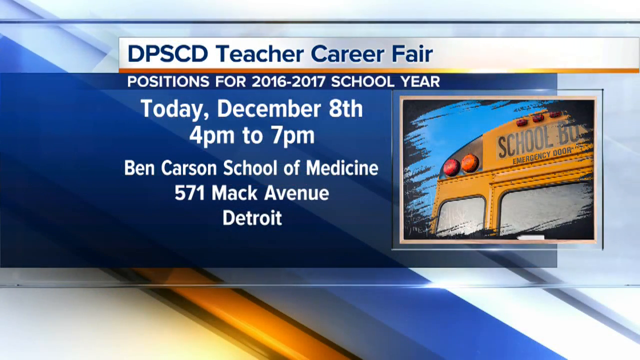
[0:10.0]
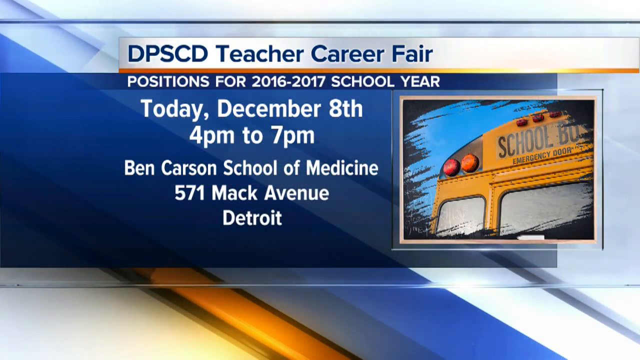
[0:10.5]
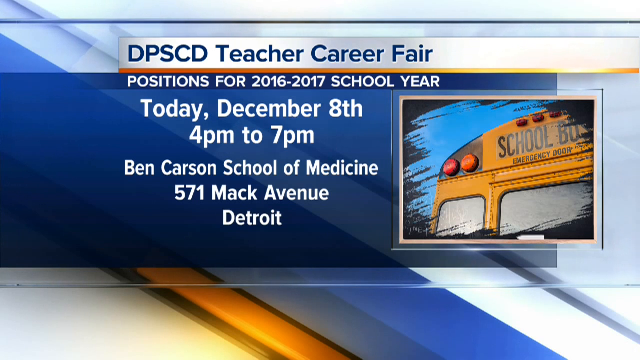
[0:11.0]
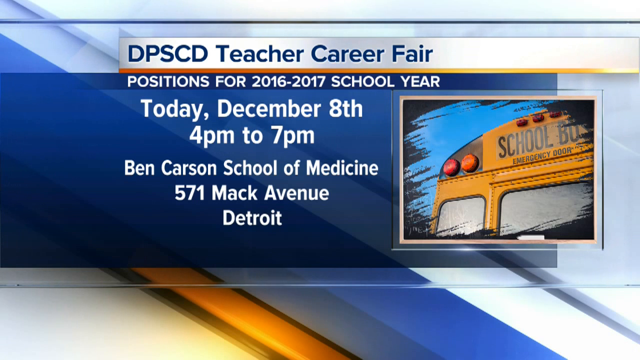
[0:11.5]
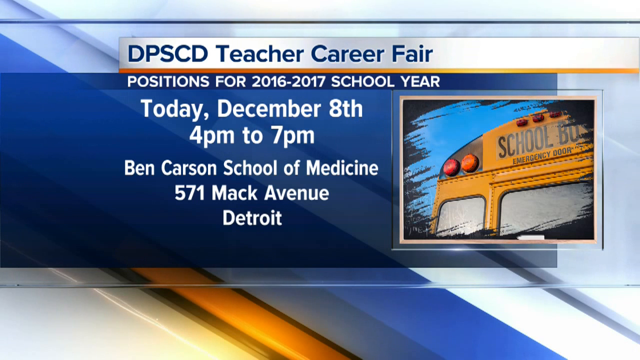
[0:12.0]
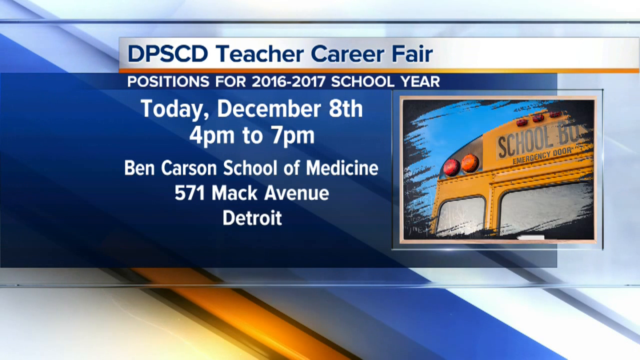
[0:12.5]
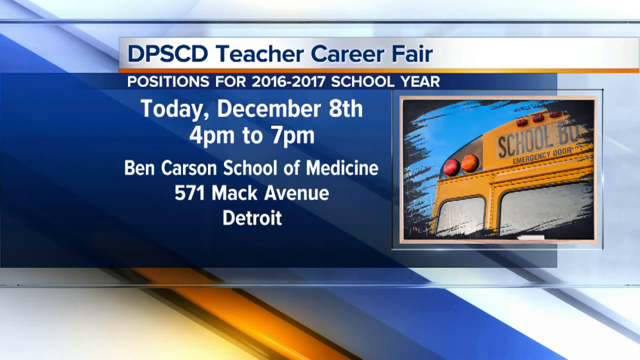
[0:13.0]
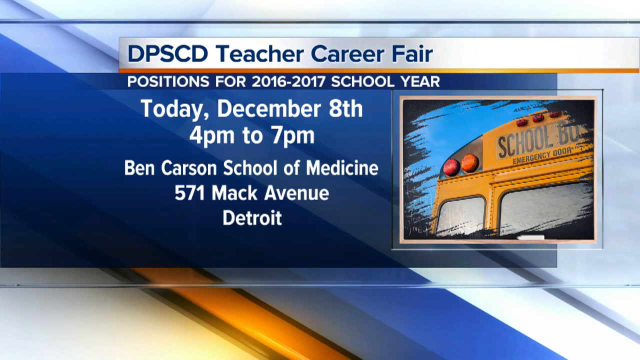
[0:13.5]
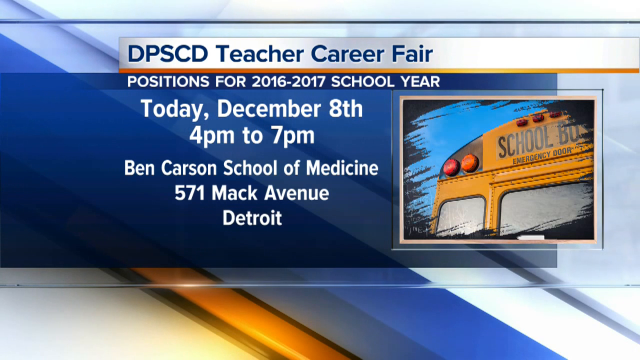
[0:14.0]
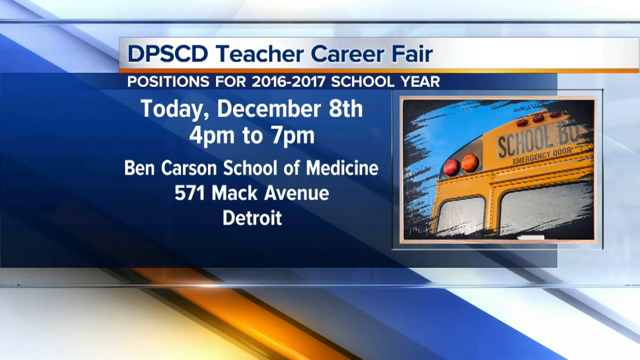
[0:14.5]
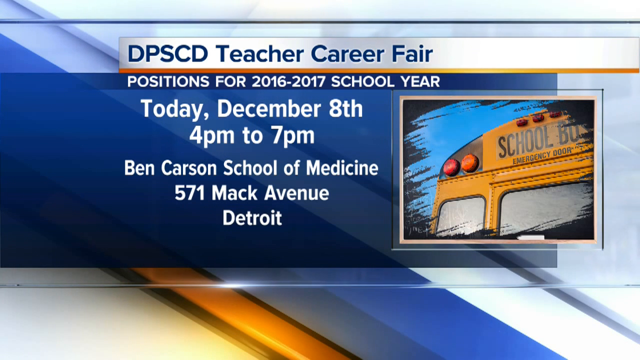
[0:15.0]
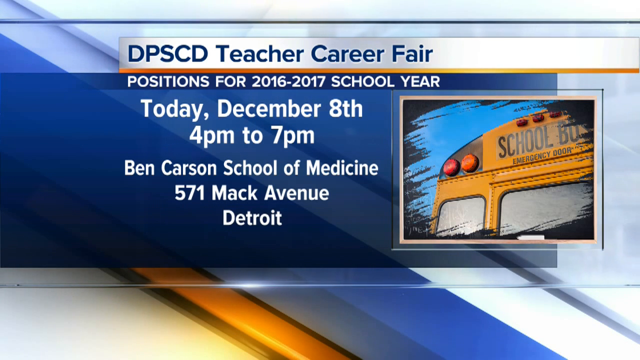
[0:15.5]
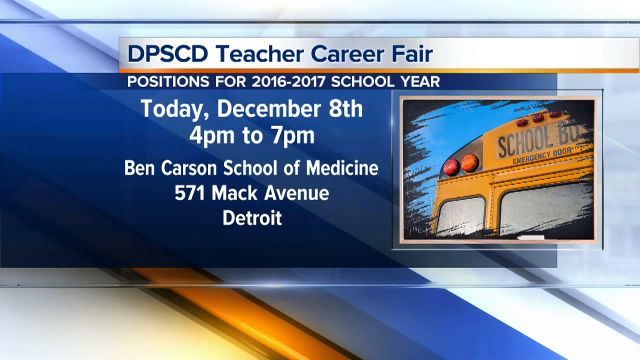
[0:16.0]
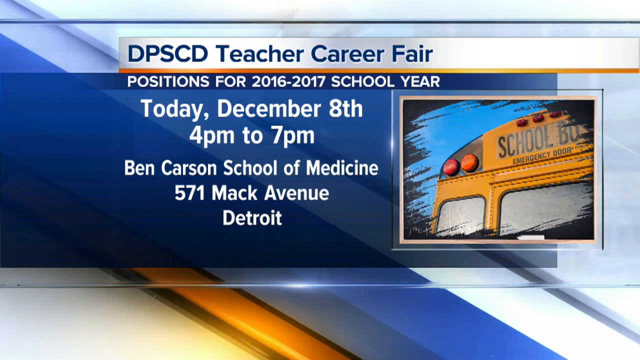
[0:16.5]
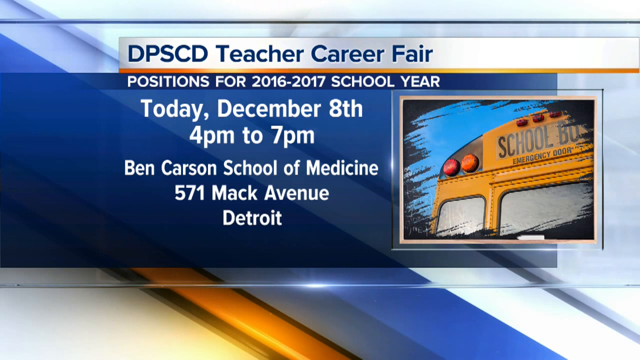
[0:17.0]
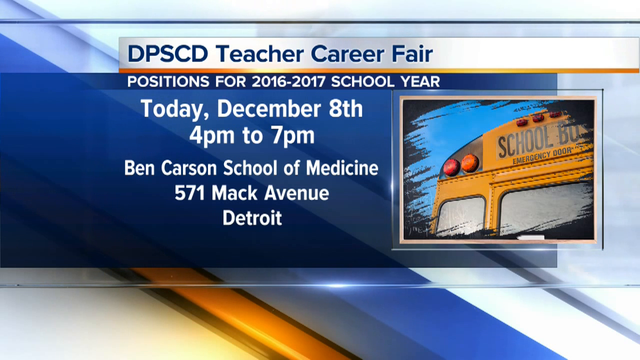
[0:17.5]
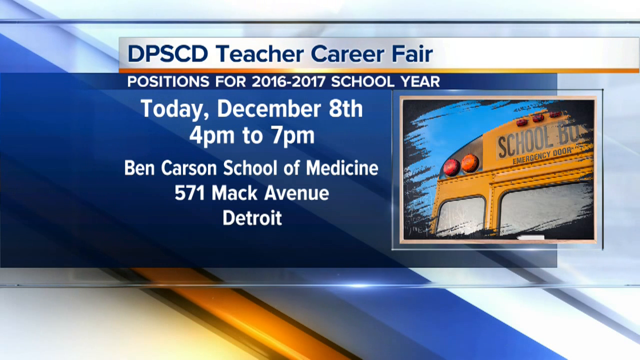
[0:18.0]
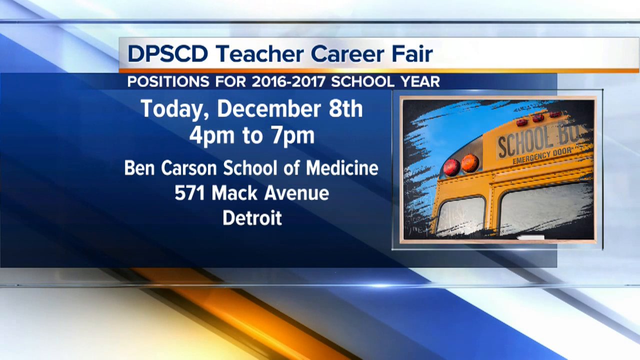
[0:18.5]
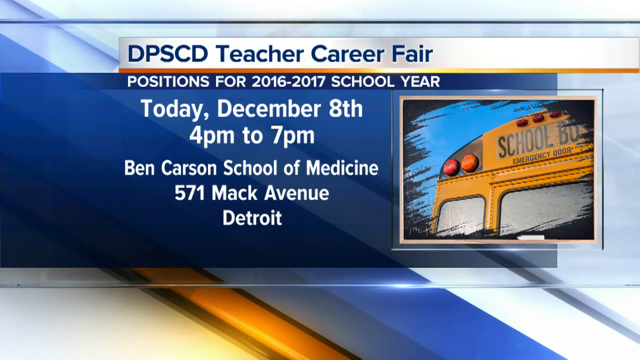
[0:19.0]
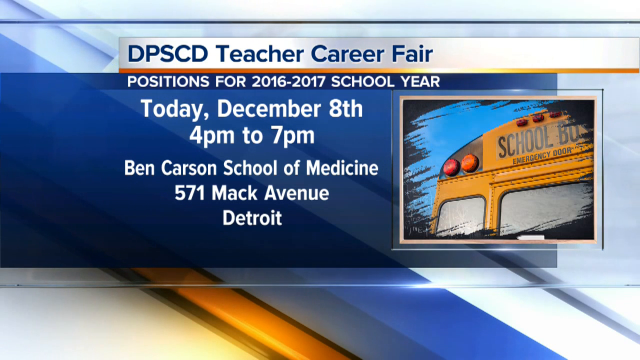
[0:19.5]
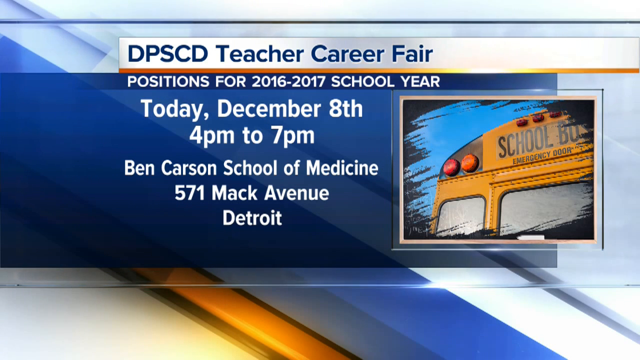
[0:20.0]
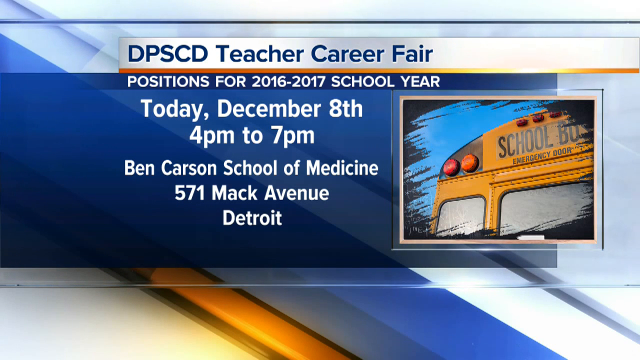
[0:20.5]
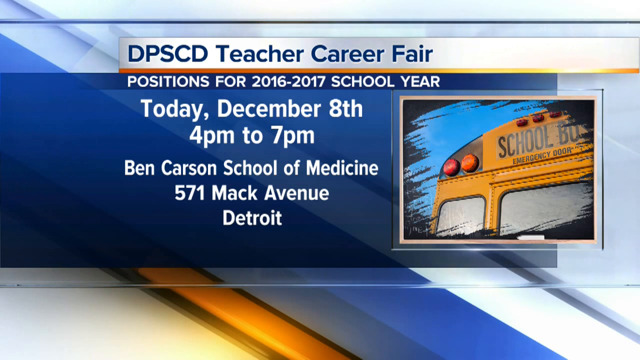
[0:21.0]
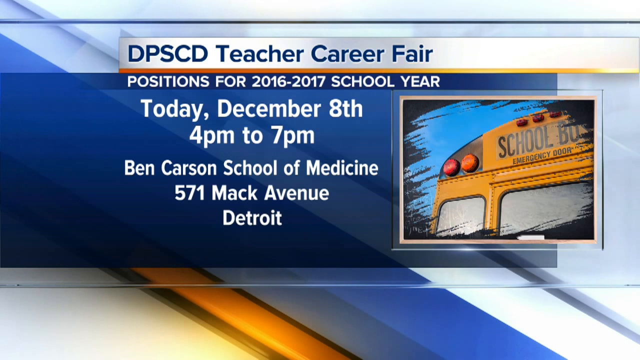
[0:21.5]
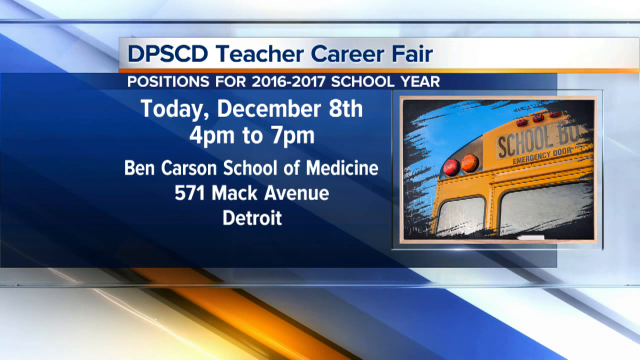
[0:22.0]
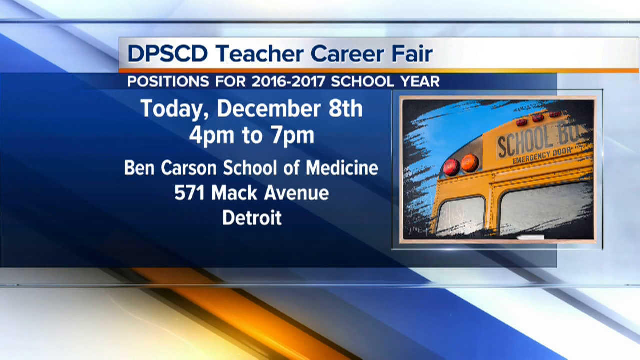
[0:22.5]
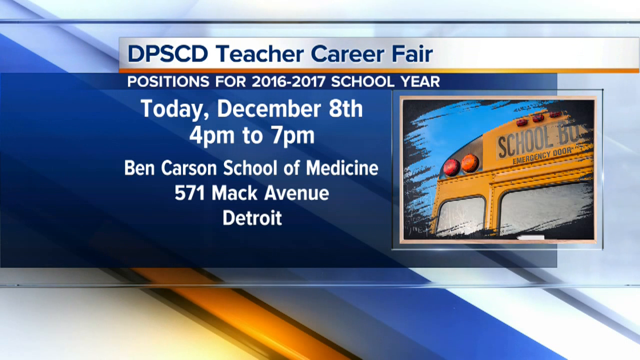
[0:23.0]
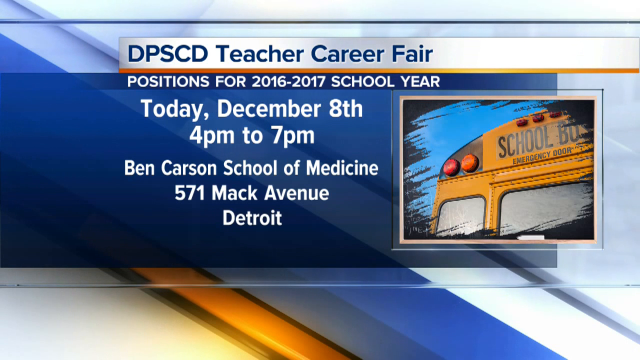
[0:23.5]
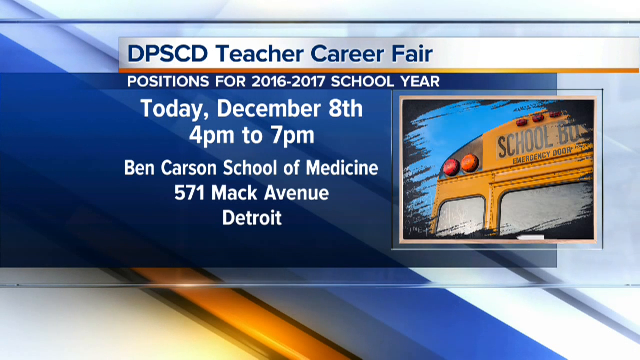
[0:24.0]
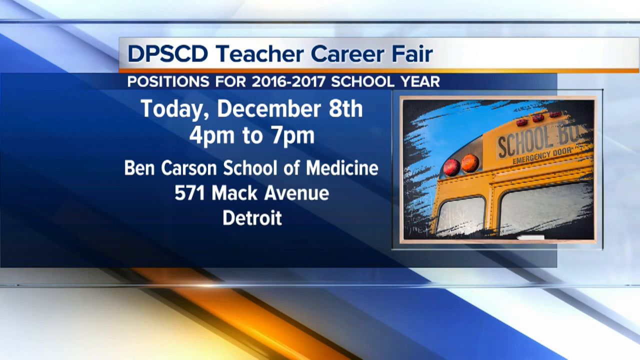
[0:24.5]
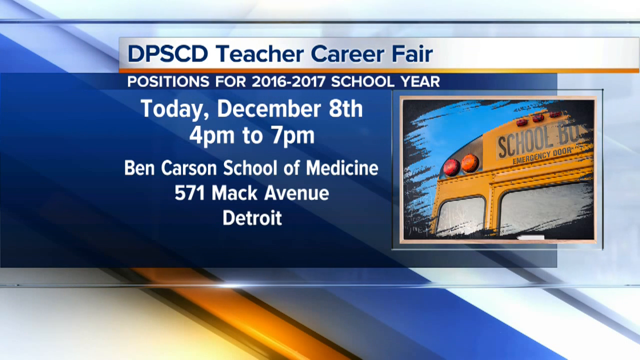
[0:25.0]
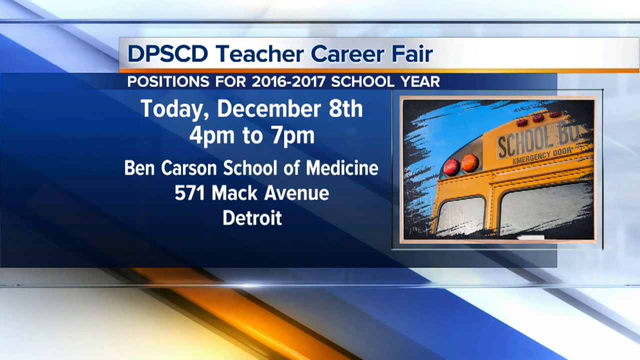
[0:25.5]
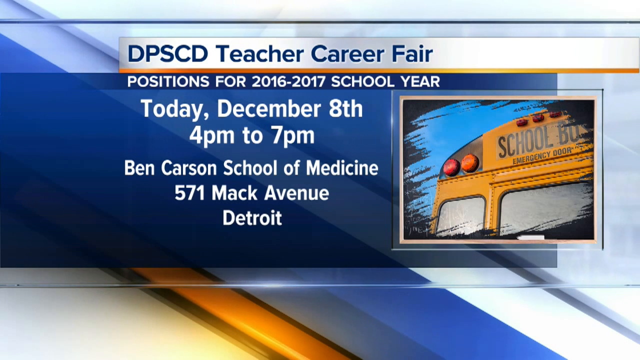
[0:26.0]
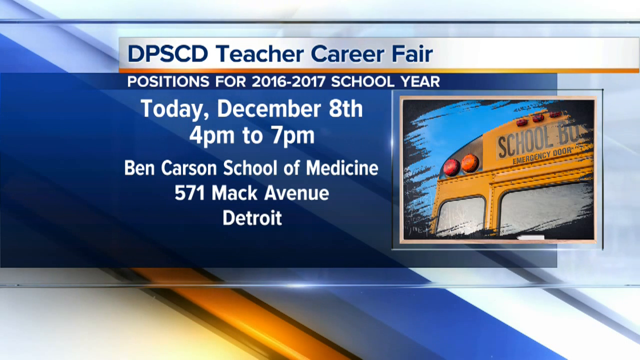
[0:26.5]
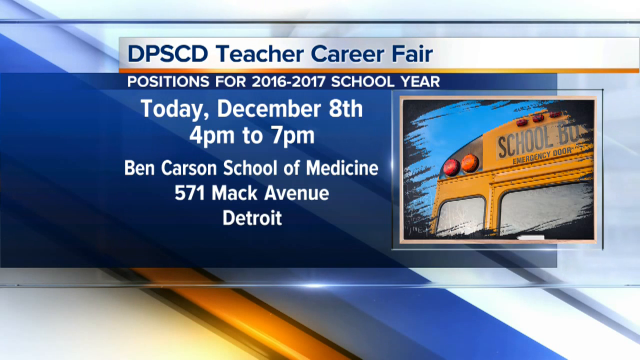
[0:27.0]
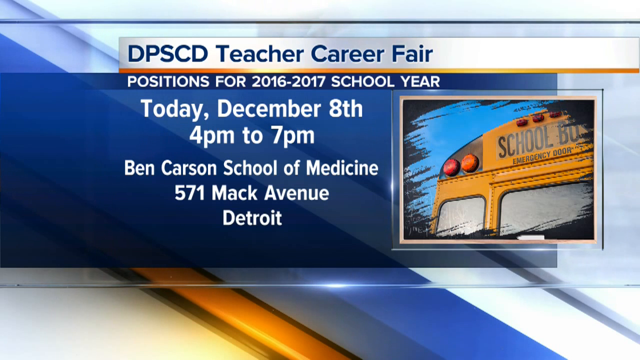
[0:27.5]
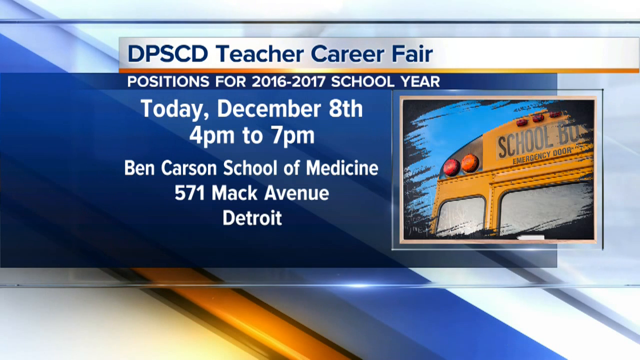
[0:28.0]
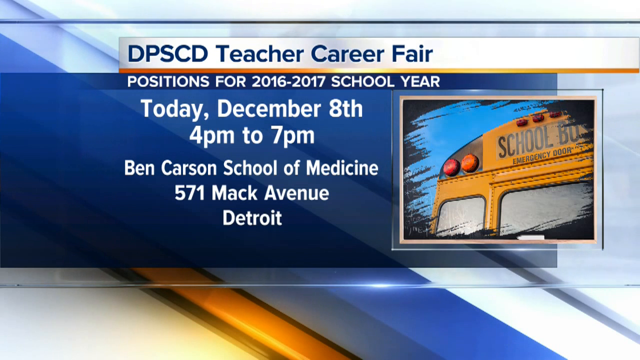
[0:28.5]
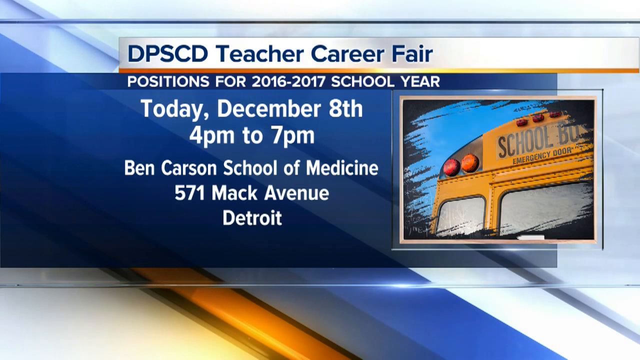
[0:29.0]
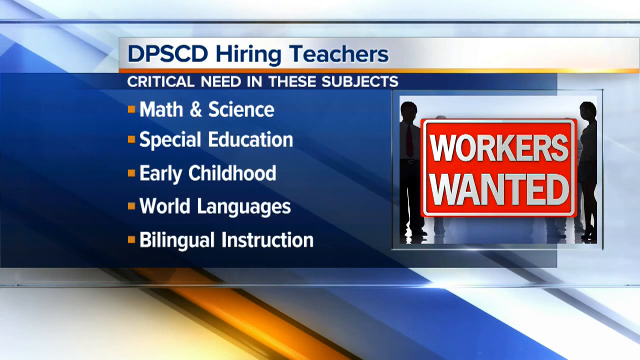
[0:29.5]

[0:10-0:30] The screen showing the DPSCD teachers career fair, with positions for the school year at Ben Carson School of Medicine in Detroit, stays up with no people visible. It then transitions to a "DPSCD hiring teachers" screen listing a critical need for math and science, special education, early childhood, world languages, and bilingual instruction teachers. A few different pages are shown in turn, and no people or animals appear.